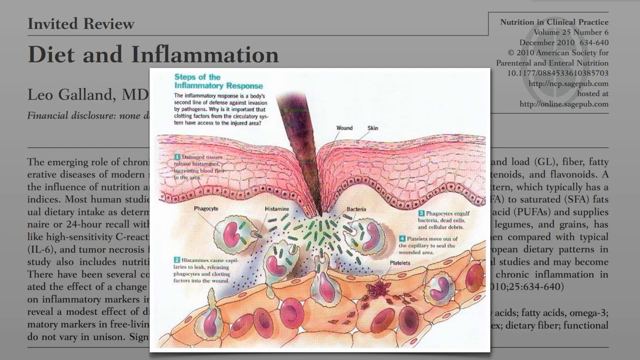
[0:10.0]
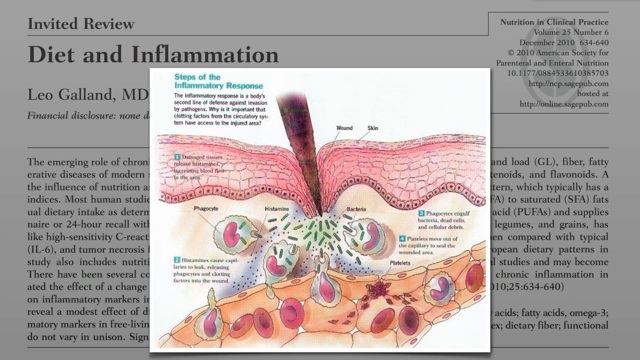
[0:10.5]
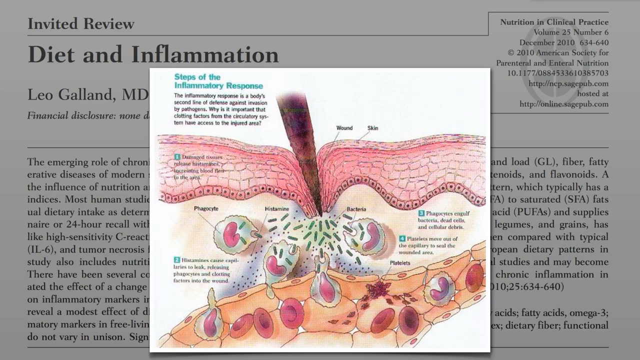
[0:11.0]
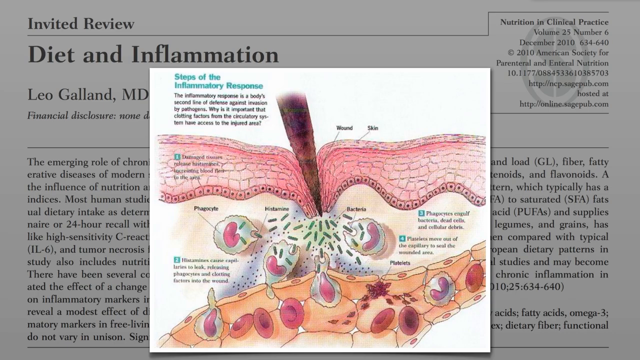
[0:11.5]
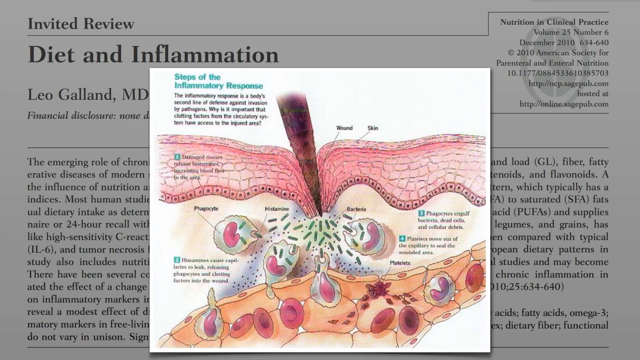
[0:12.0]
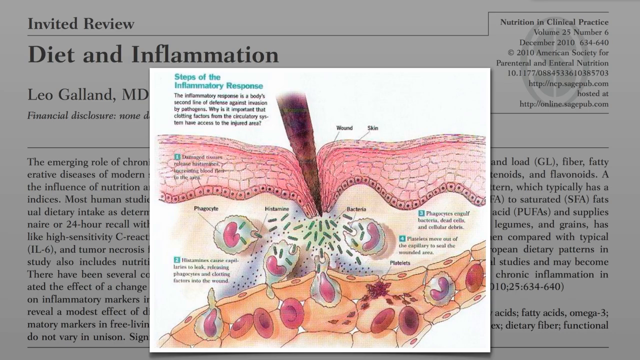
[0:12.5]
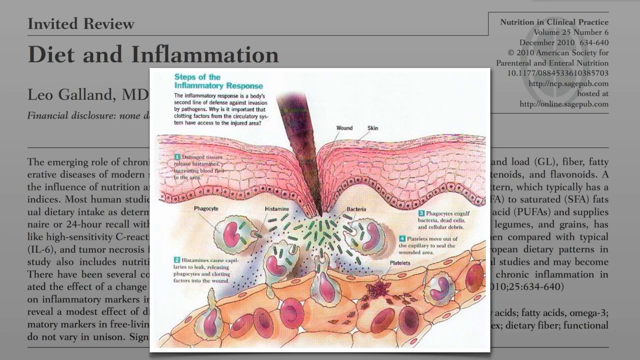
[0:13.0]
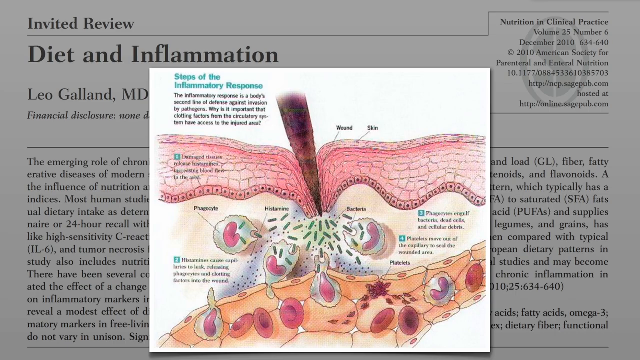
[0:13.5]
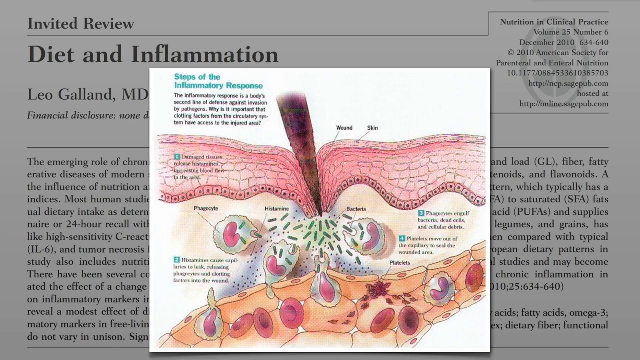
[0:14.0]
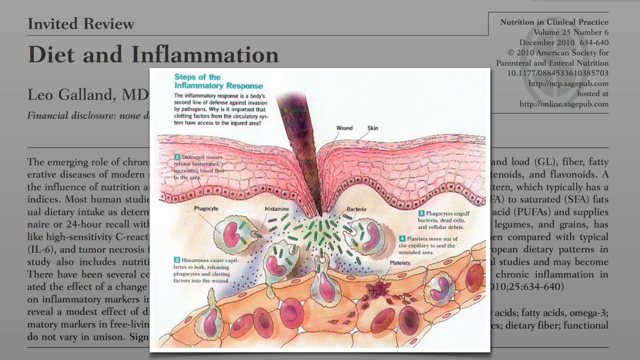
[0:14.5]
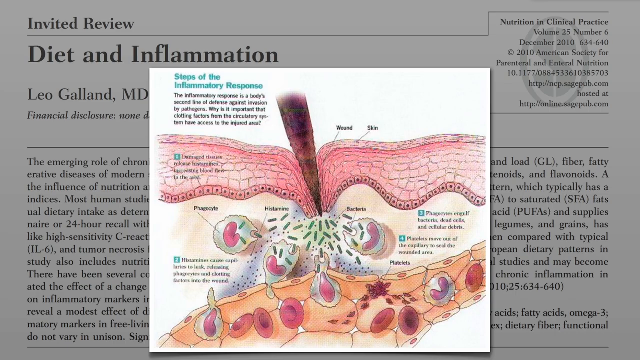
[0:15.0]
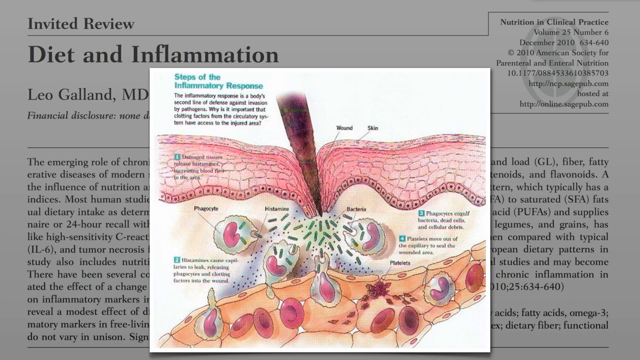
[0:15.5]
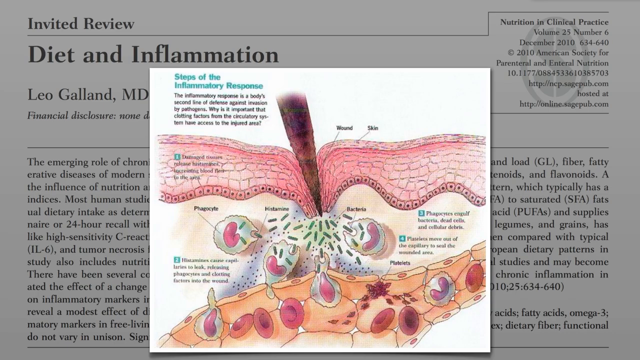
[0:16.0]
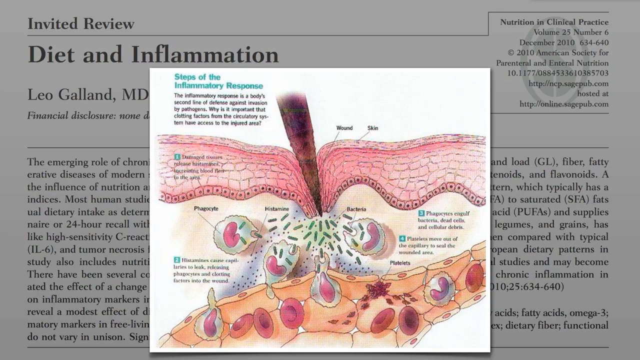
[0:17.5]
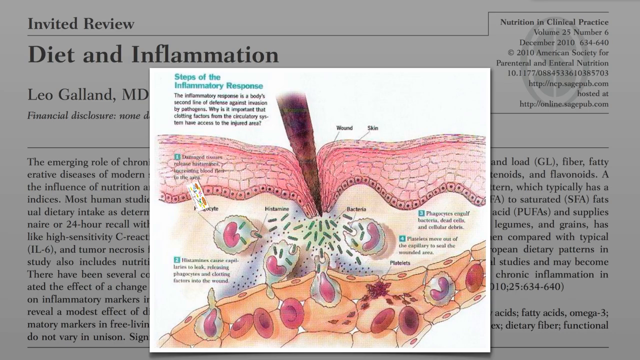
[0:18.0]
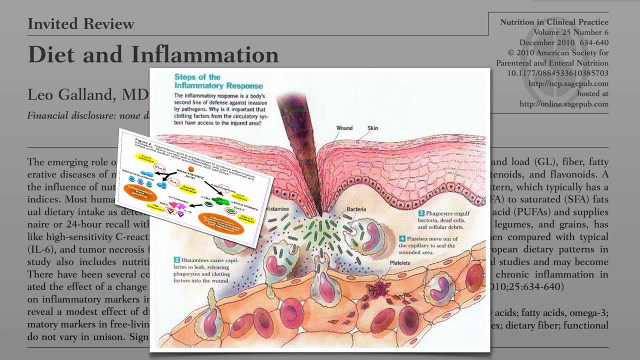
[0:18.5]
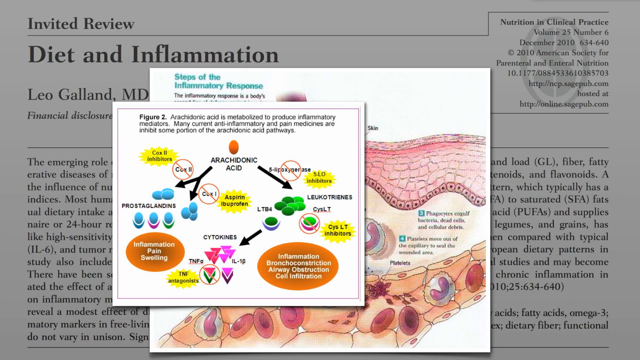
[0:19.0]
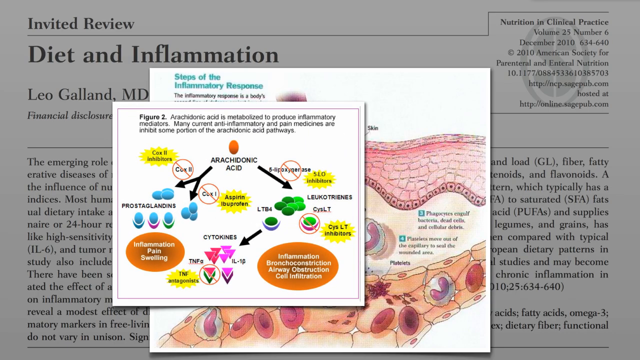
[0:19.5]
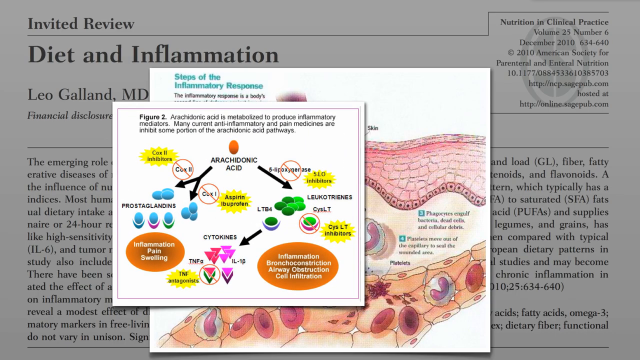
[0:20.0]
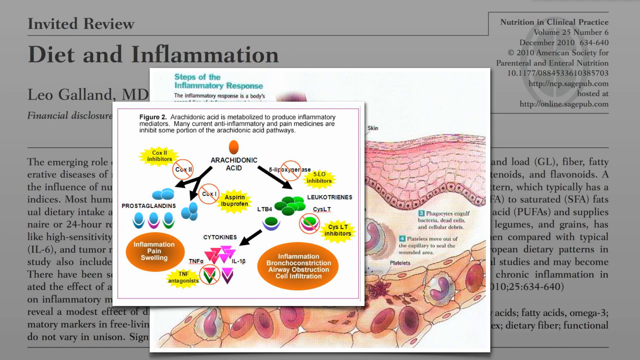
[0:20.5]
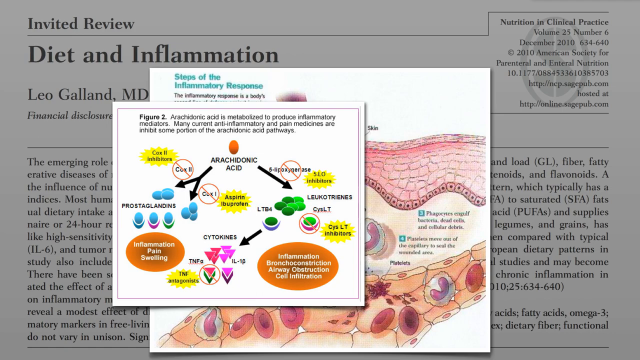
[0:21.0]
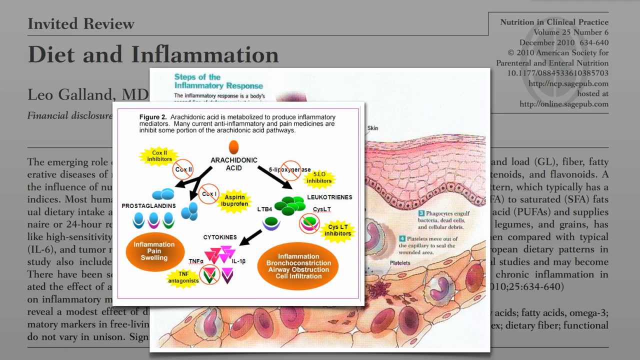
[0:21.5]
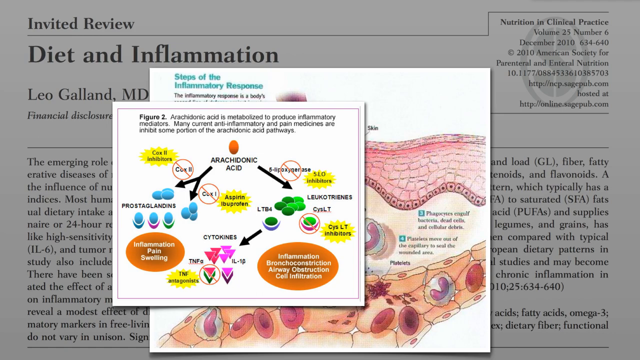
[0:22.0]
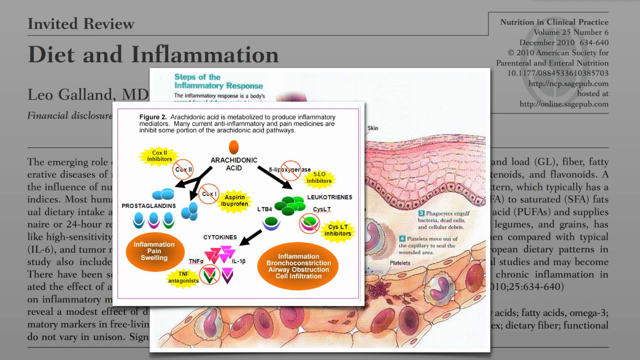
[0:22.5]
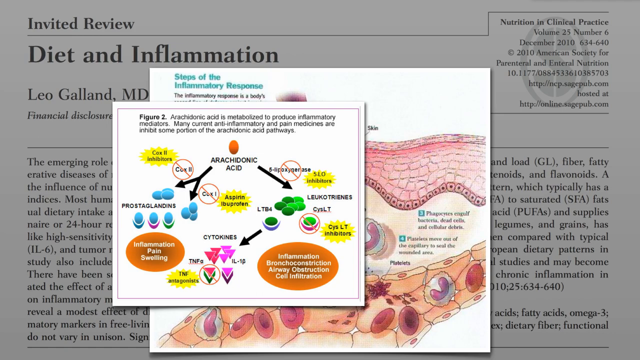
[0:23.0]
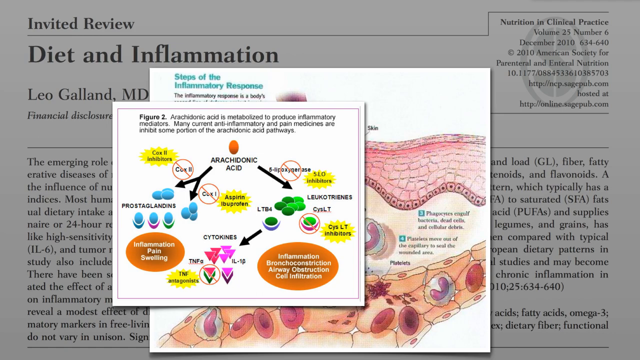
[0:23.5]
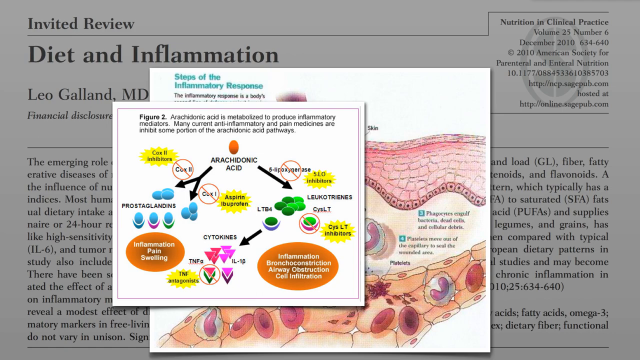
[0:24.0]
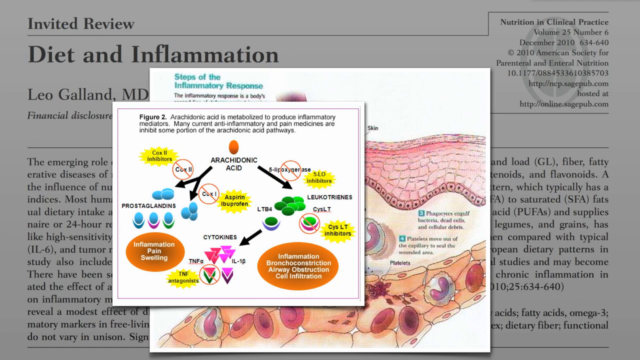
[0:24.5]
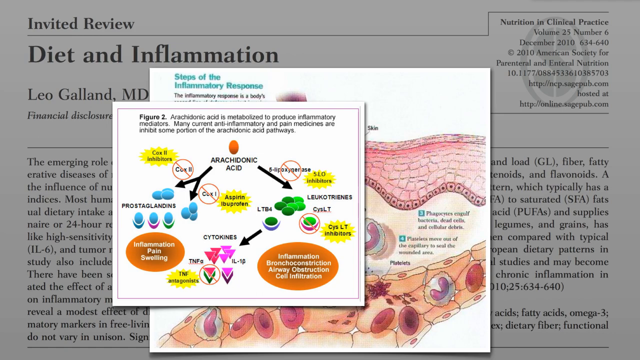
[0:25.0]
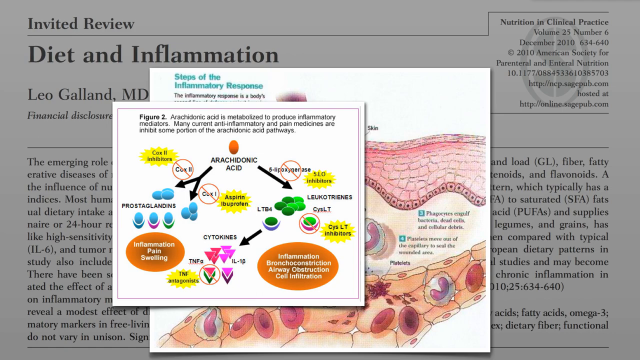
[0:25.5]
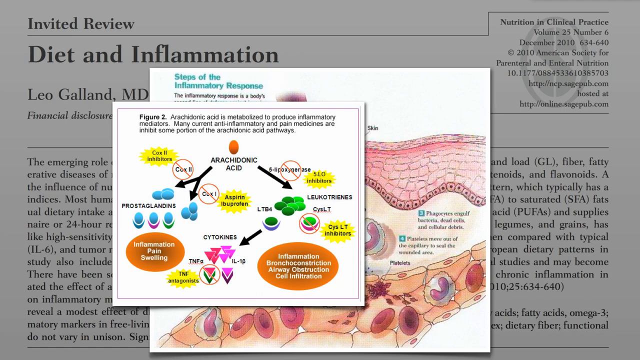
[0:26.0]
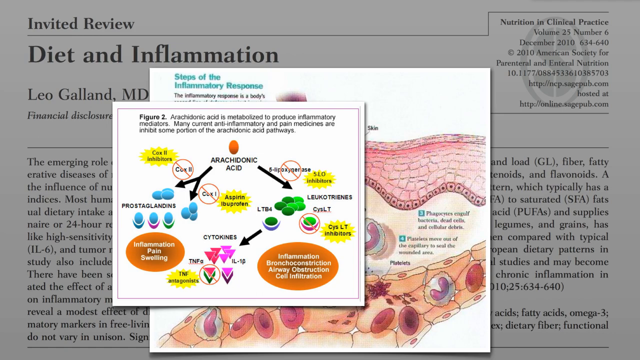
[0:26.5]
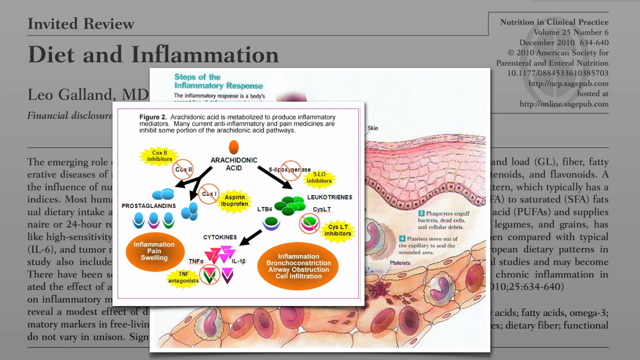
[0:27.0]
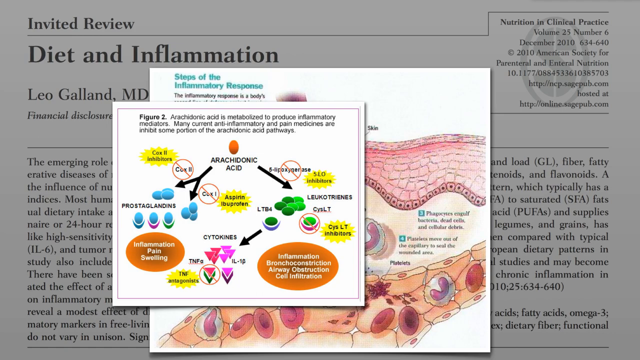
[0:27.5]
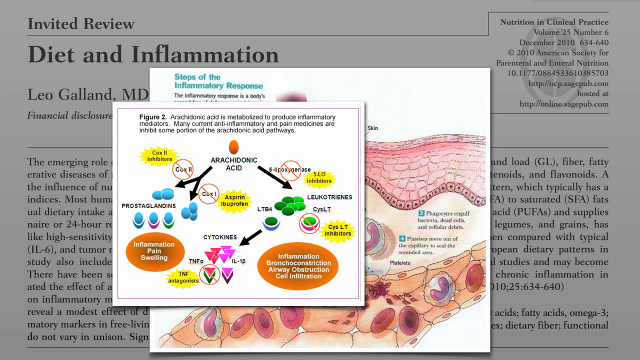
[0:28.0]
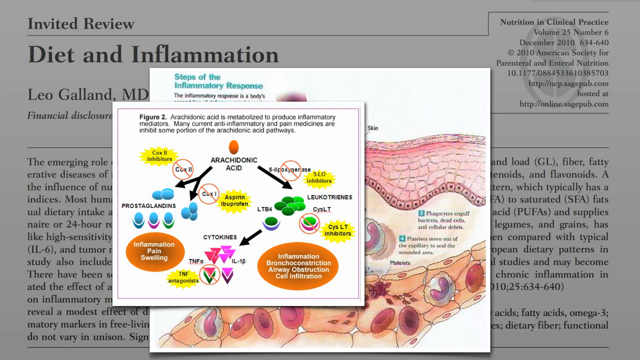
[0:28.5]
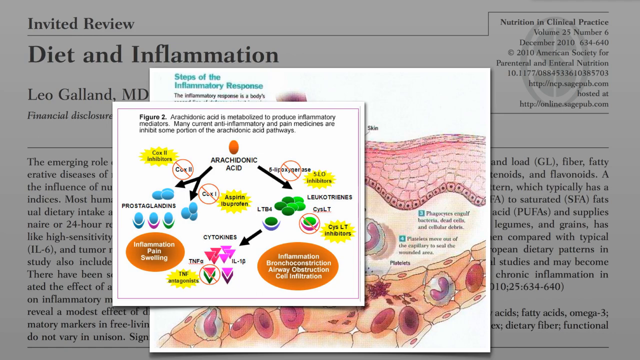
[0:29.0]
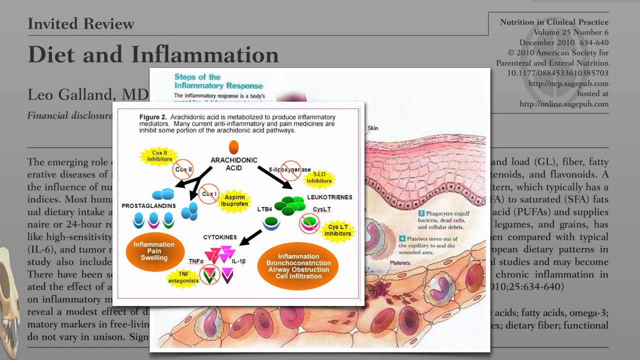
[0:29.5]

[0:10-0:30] The same sketch remains on screen: a full illustration with about four steps depicting how pathogens invade the skin and trigger an inflammatory response involving clotting factors and pagocytes. A smaller pop-up window then appears with a figure from a different article. It is figure two, "arachidonic acid is metabolized to produce inflammatory mediators", noting that many current anti-inflammatory and pain medicines inhibit some portion of the arachidonic acid pathways. The diagram illustrates the steps of the inflammatory response, including the role of prostaglandins and cytokines, and how various inhibitors target these pathways to reduce inflammation, pain and other symptoms. This second chart has a branching illustration whose main points include inflammation, pain, swelling, airway obstruction and cell infiltration. There are also sketches of aspirin and ibuprofen and how they interact with pain.